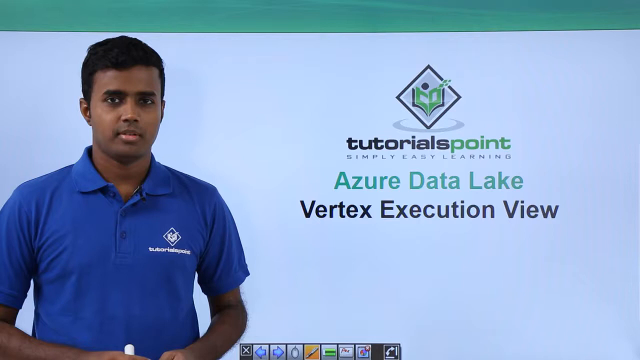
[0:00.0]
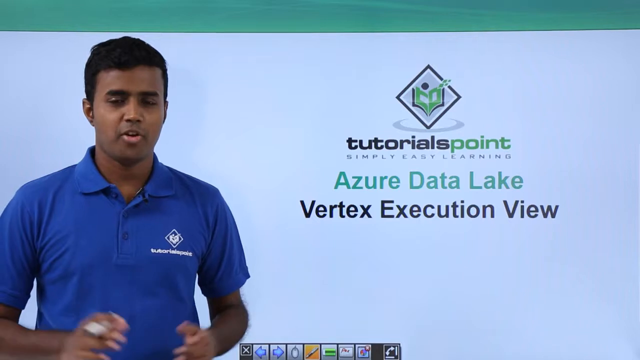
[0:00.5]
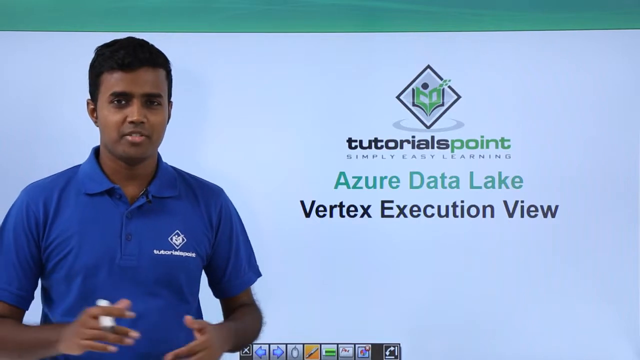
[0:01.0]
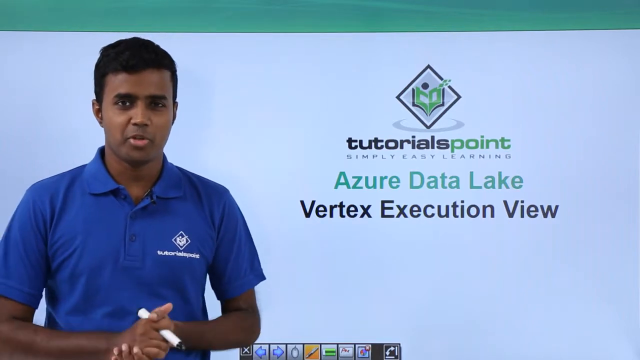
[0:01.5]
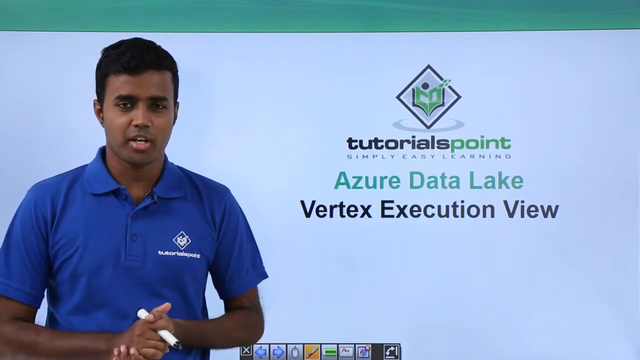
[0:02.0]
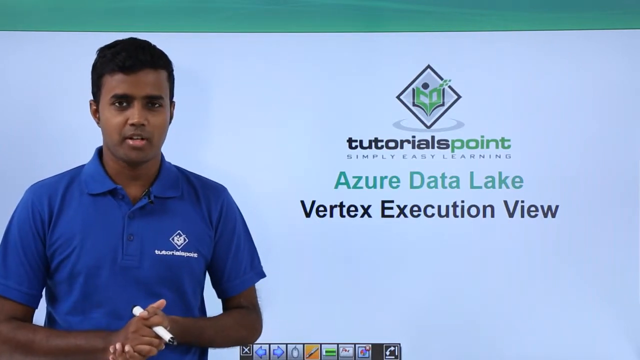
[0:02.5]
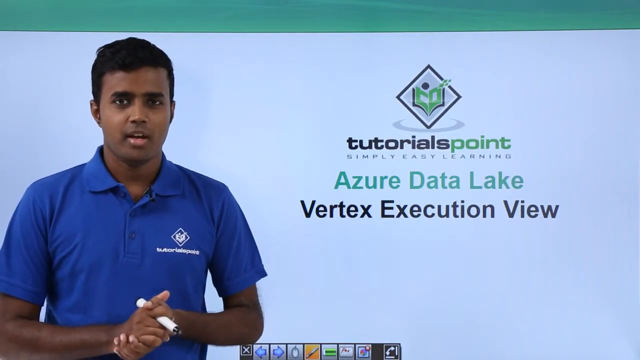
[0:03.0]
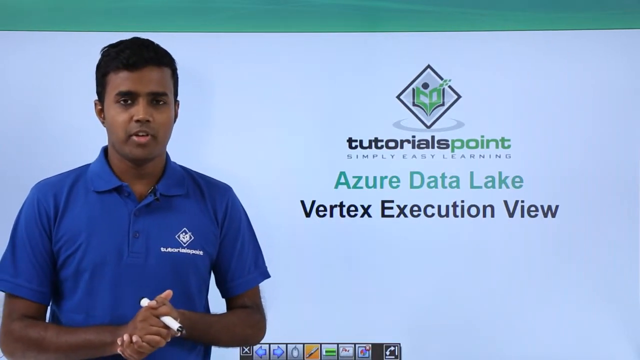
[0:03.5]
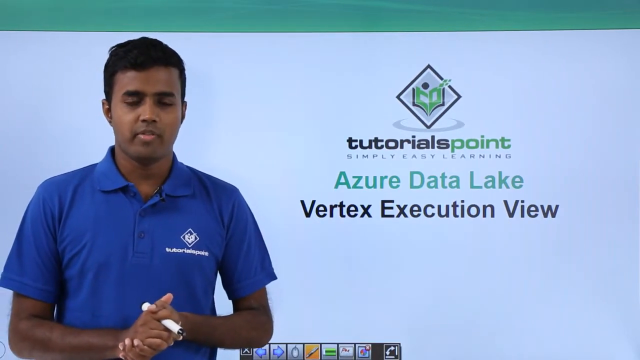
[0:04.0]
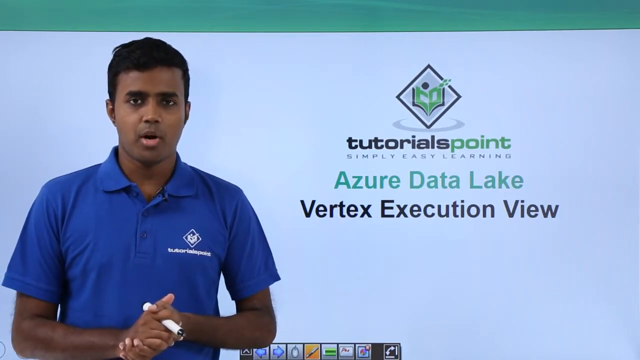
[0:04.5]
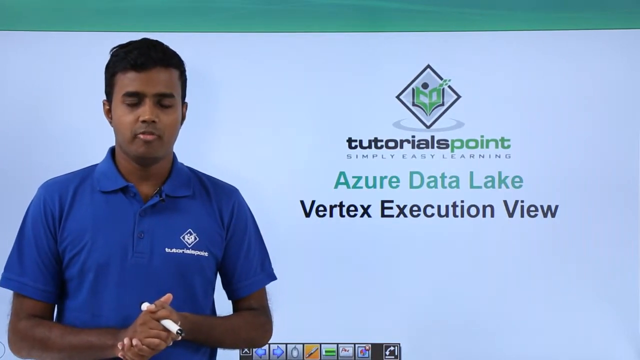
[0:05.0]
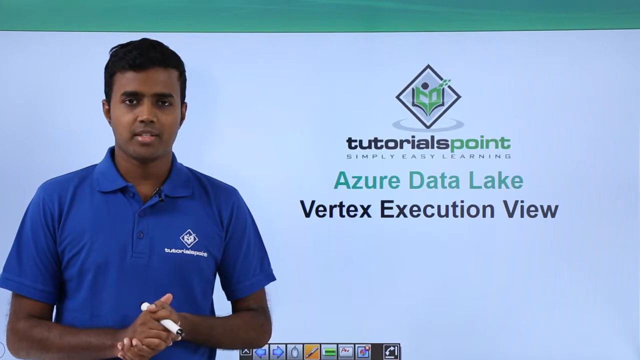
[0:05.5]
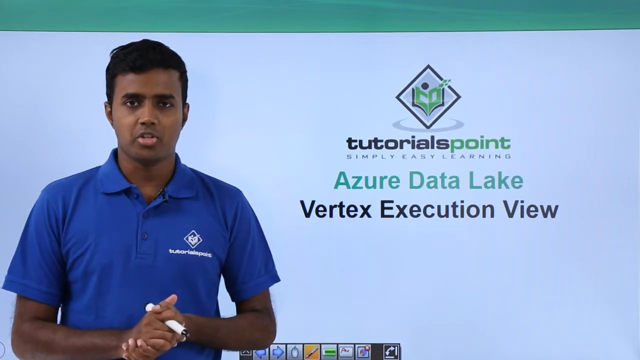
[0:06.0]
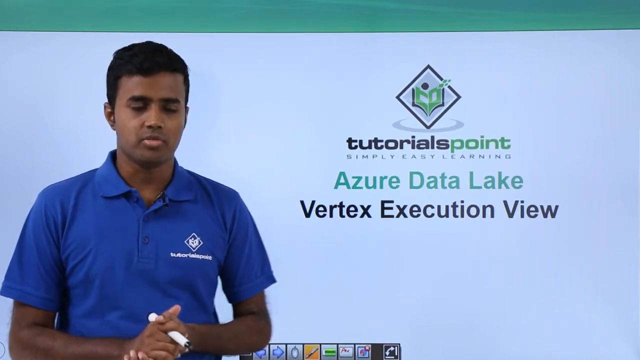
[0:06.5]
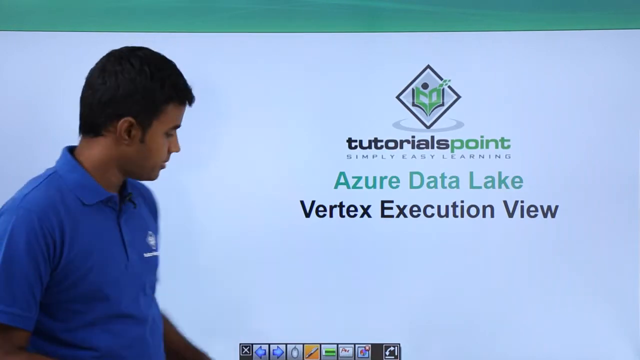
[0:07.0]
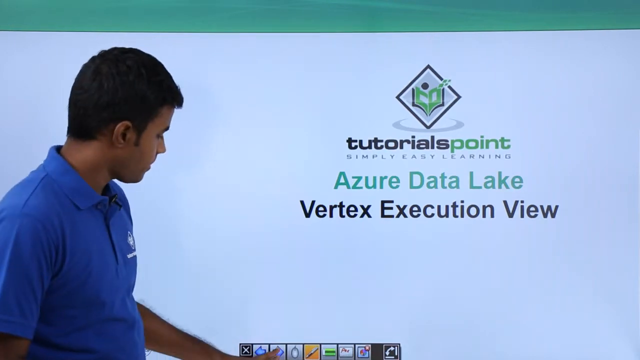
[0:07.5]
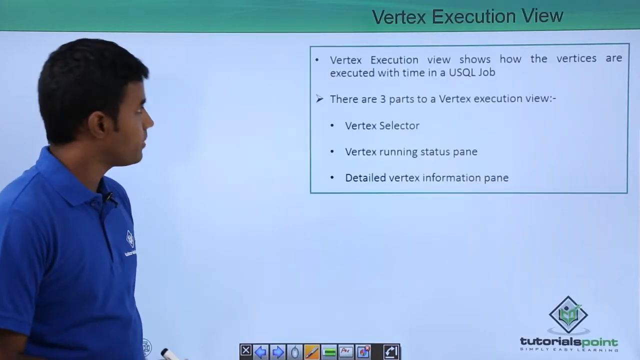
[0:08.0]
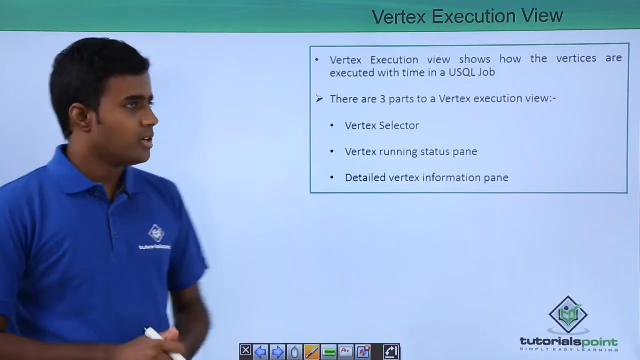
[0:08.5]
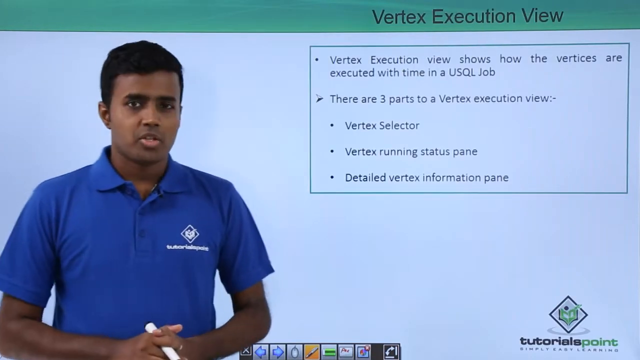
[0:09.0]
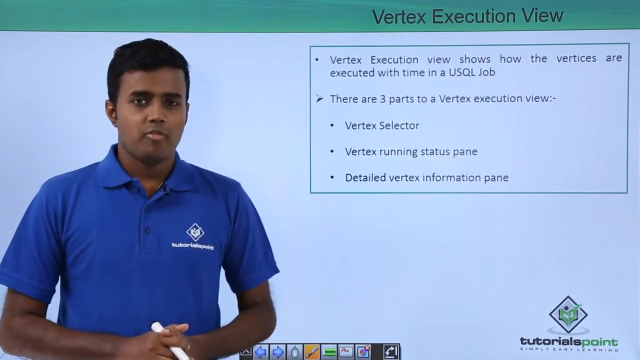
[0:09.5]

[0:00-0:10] A blue background with a green upper border fills the screen. A young, dark-skinned man is off to the left-hand side, wearing a royal blue shirt with a white logo on it. To his right is a logo for Tutorials Point, "Simply Easy Learning," along with the words "Azure Data Lake, Vertex Execution View" on screen. The young man is speaking, his hands clasped, holding a marker or a pointer in his right hand. He turns and pushes a button with his left hand, never turning his shoulders away from the front of the screen.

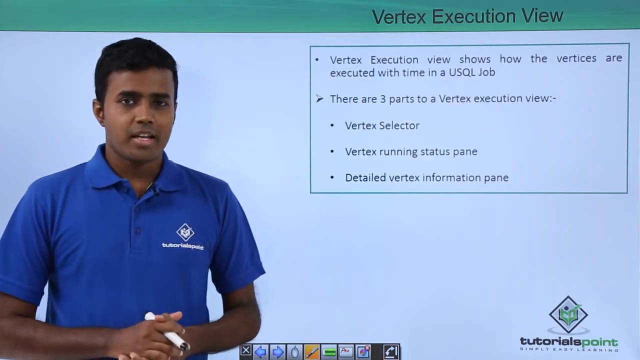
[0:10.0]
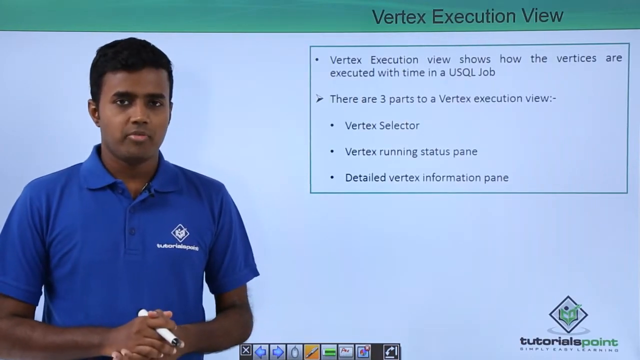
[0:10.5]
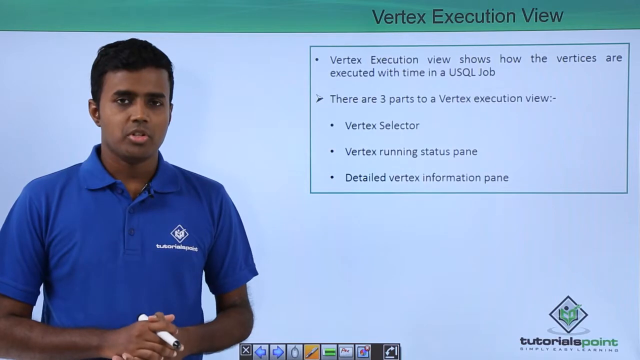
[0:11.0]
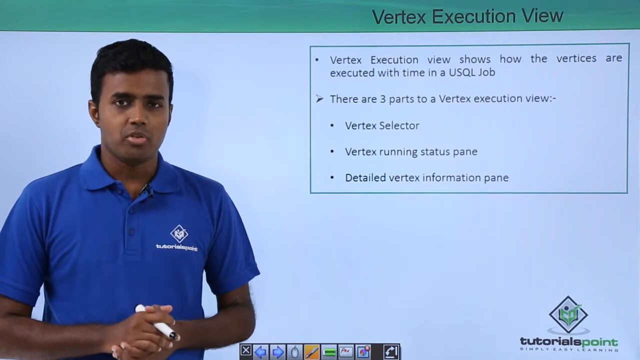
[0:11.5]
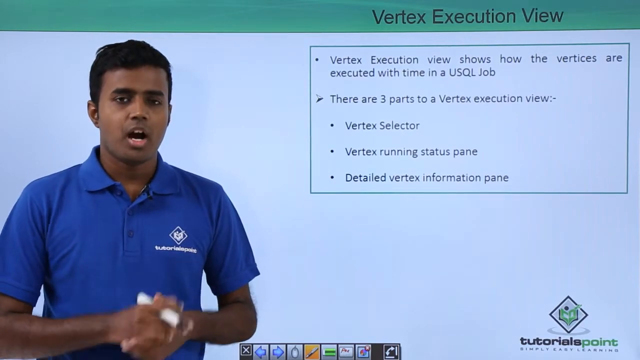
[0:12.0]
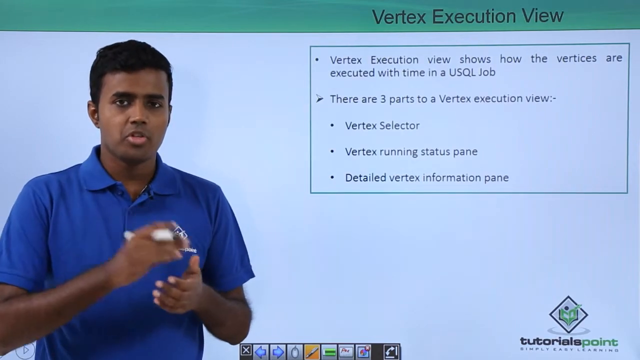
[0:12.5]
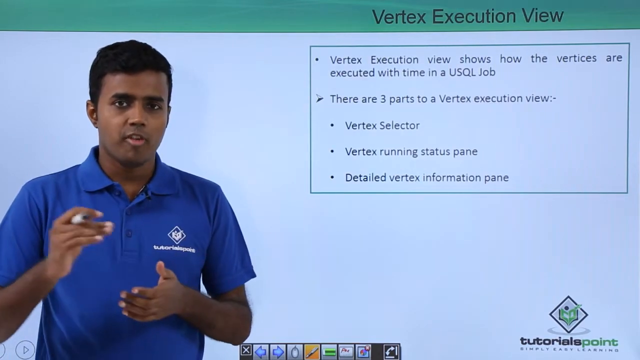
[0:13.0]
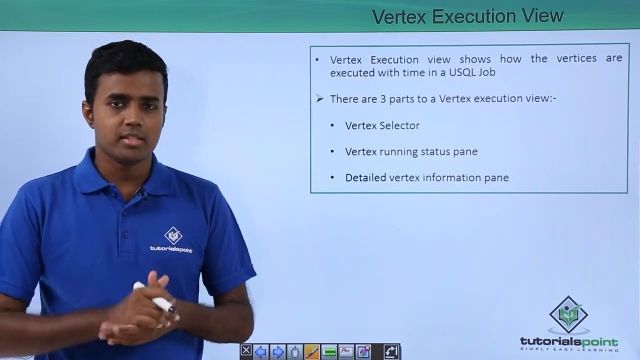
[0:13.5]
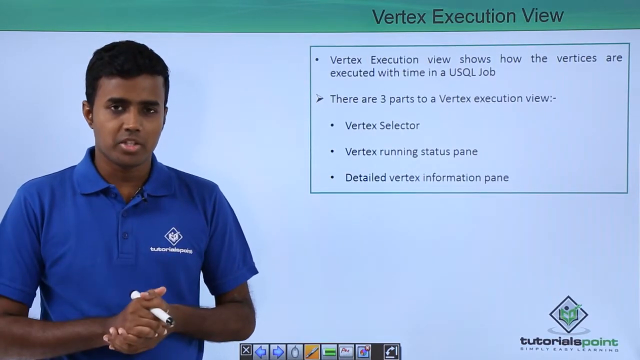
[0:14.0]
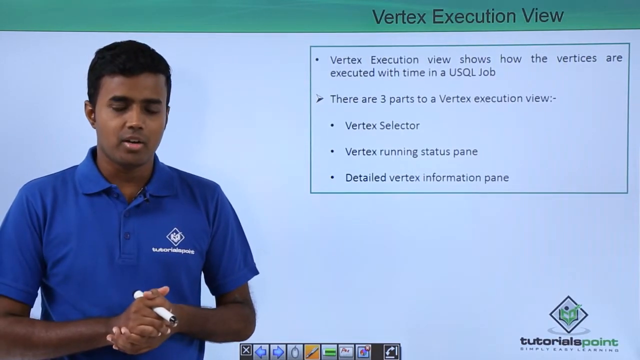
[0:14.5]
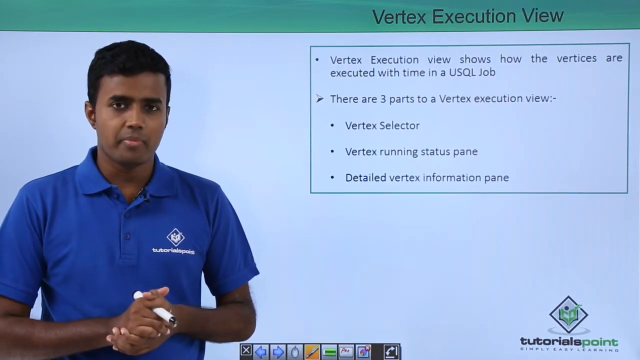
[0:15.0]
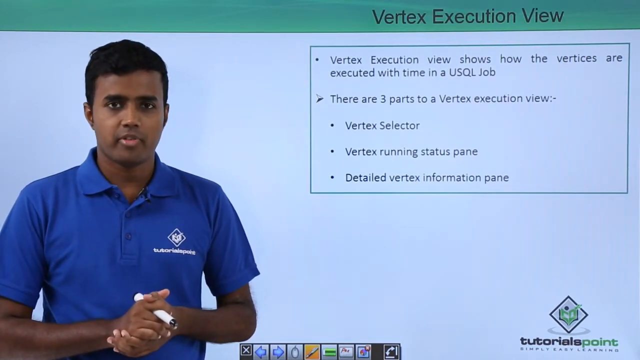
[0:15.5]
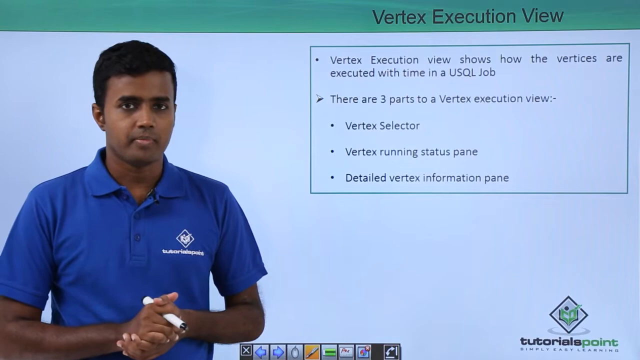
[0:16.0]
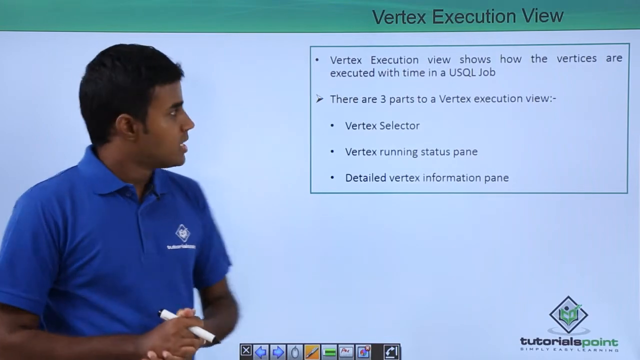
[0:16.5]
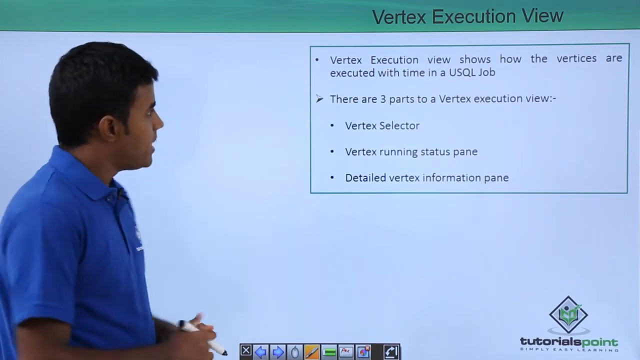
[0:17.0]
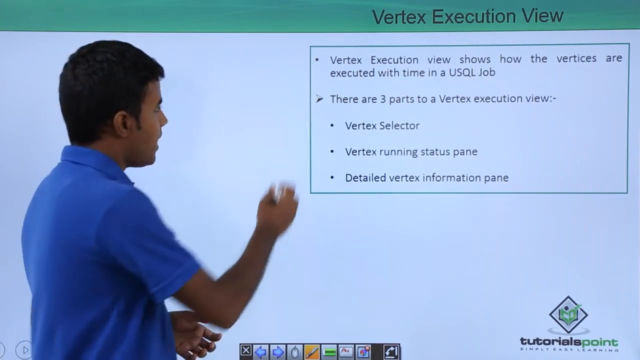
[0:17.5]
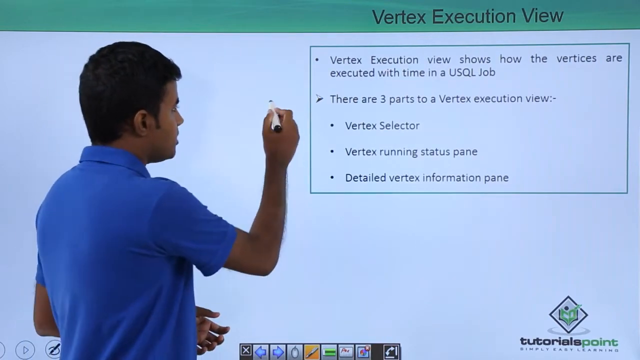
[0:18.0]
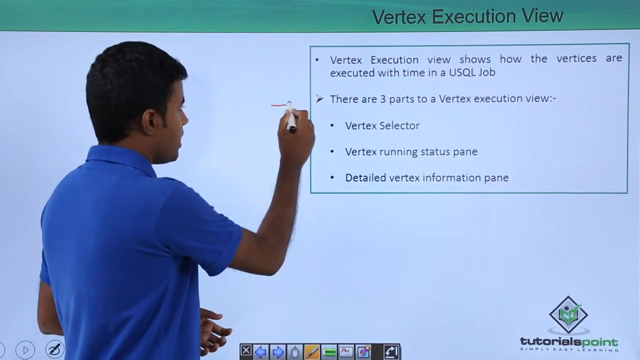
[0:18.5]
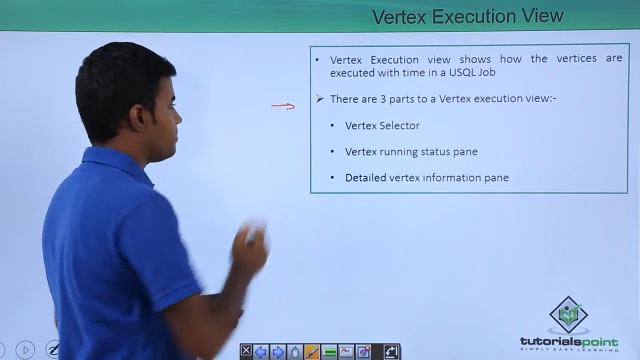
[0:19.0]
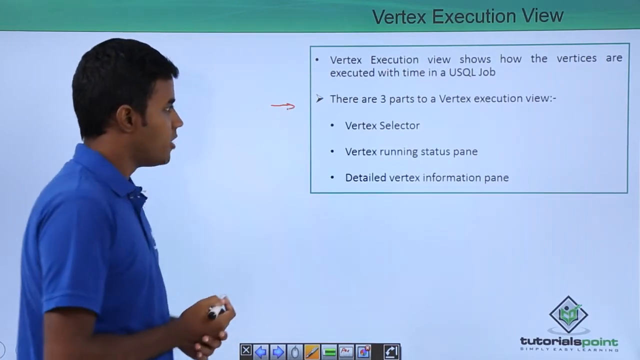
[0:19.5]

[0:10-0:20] The young man, who has dark, closely cropped hair, stands in front of the blue background. A text box on screen reads "vertex execution view shows how the vertices are executed with time in a USQL job," followed by an arrow and "there are three parts to a vertex execution view," with bullet points "vertex selector," "vertex running status pane" and "detailed vertex information pane." He stands with his hands clasped and a marker in his right hand, speaking and gesturing with chopping motions of his right hand. He then turns his back to the camera and marks on the screen with a red marker.